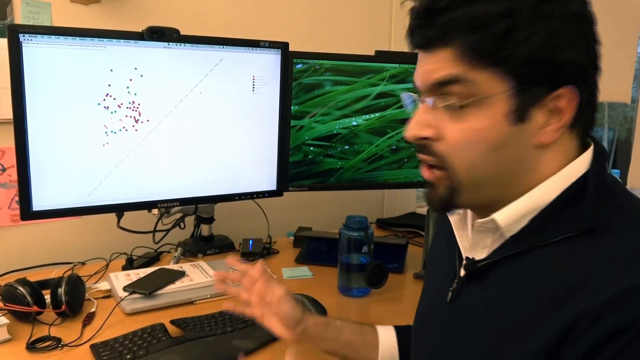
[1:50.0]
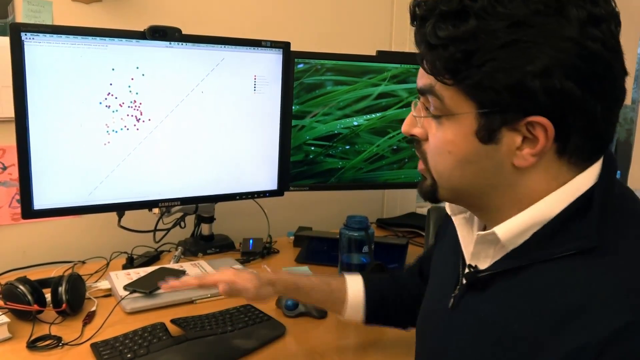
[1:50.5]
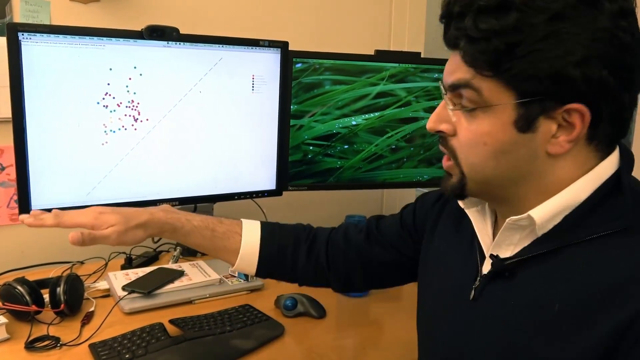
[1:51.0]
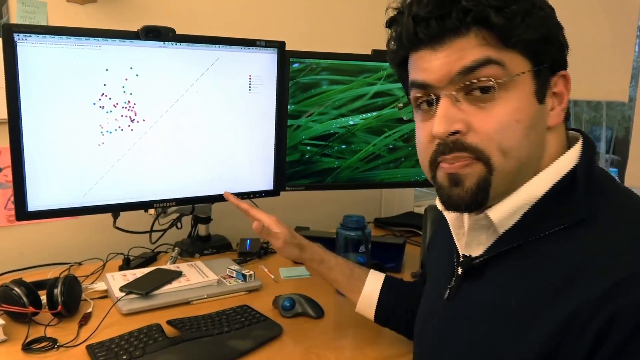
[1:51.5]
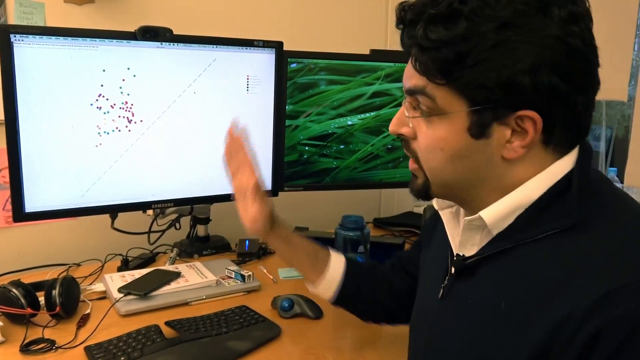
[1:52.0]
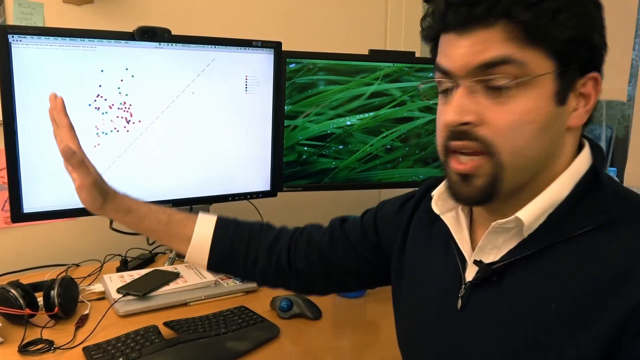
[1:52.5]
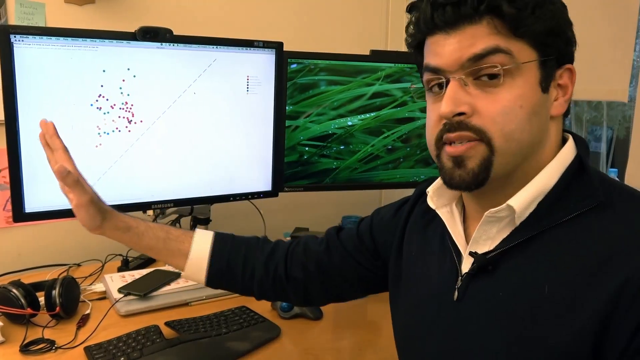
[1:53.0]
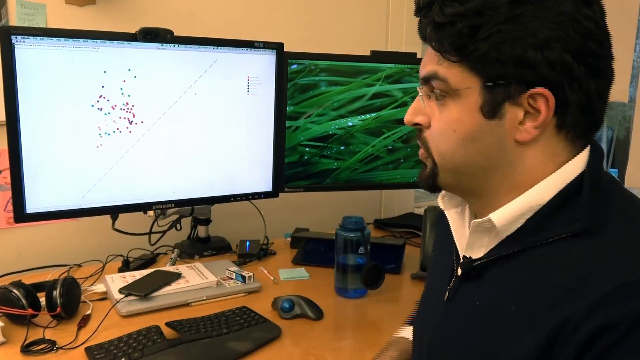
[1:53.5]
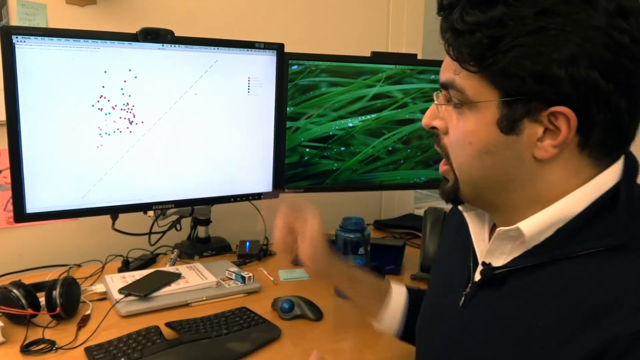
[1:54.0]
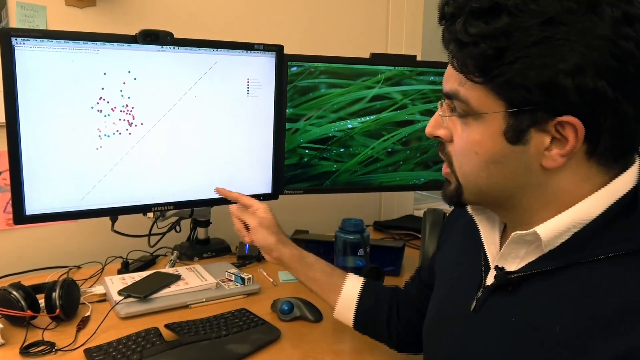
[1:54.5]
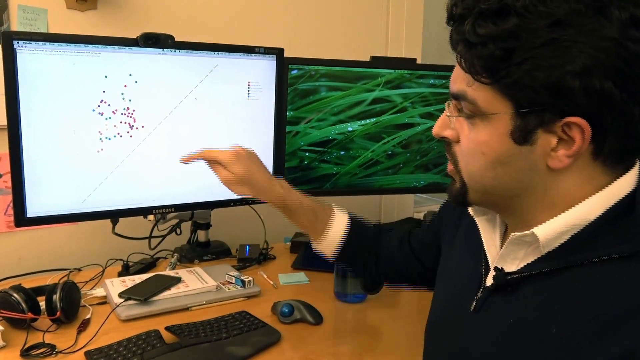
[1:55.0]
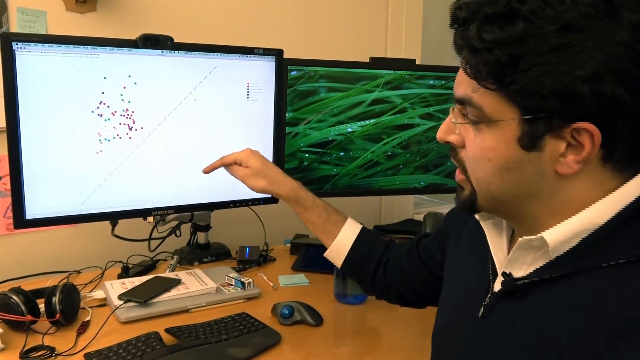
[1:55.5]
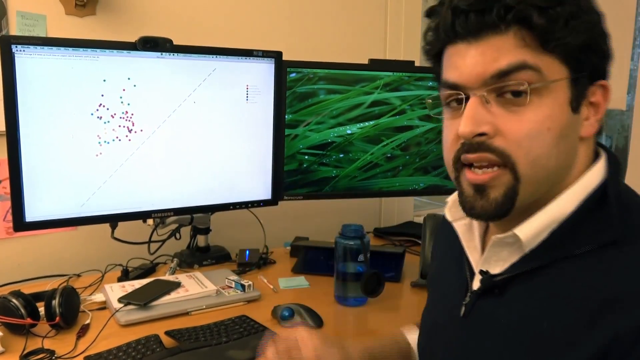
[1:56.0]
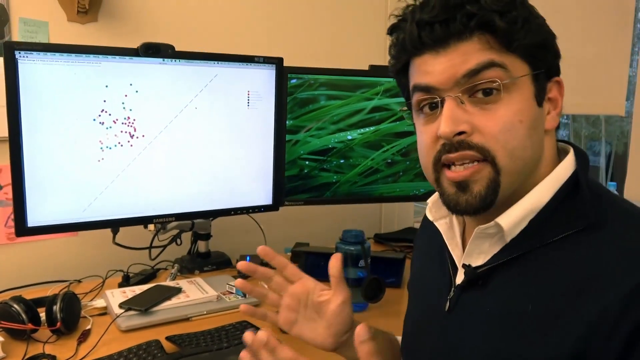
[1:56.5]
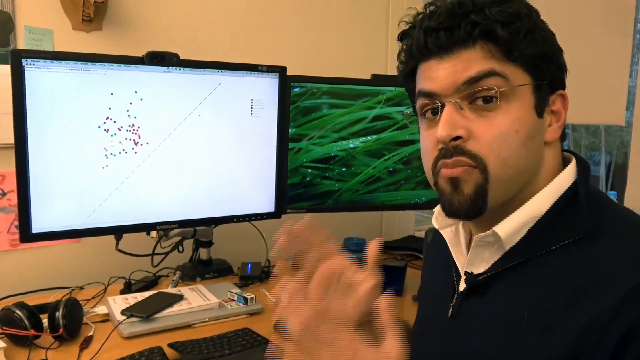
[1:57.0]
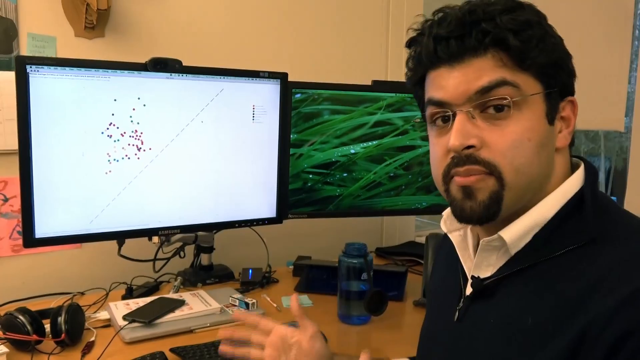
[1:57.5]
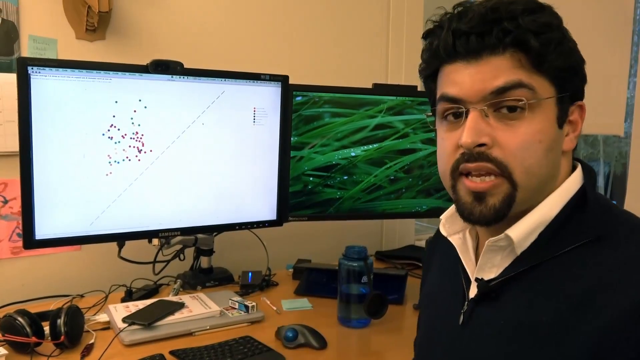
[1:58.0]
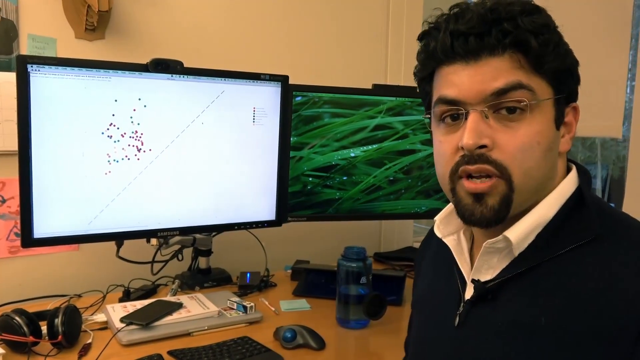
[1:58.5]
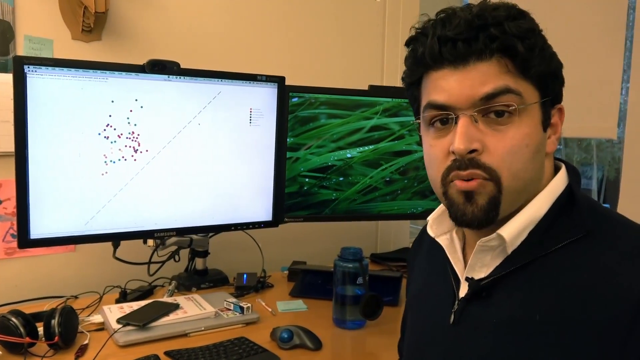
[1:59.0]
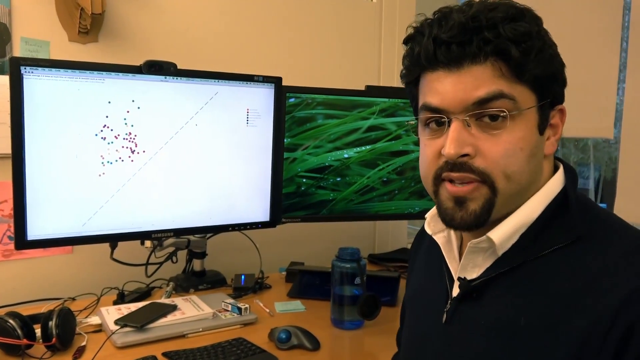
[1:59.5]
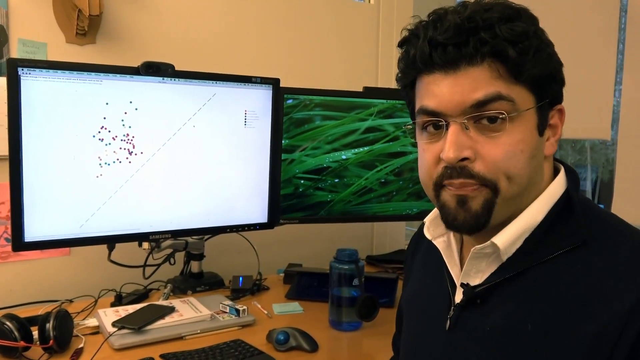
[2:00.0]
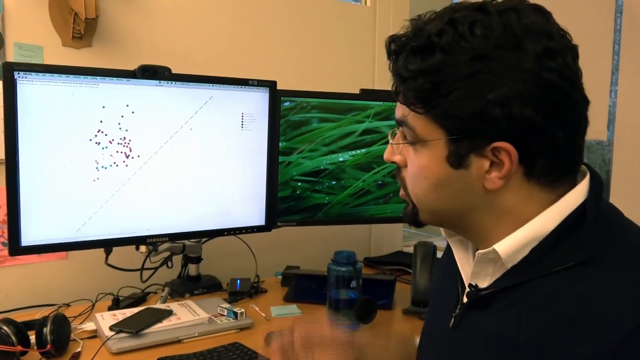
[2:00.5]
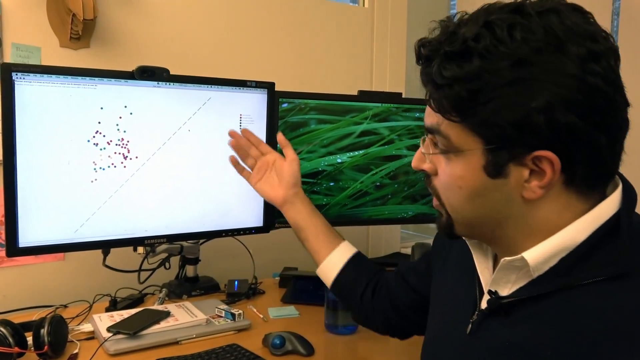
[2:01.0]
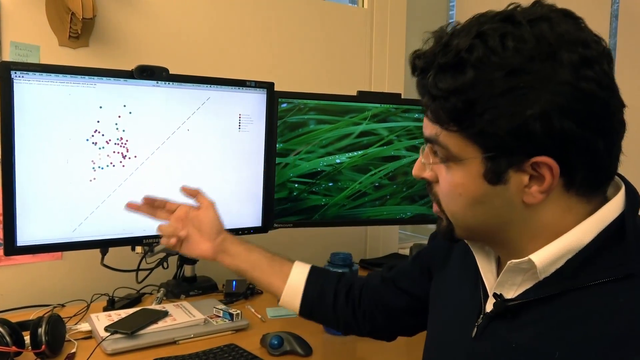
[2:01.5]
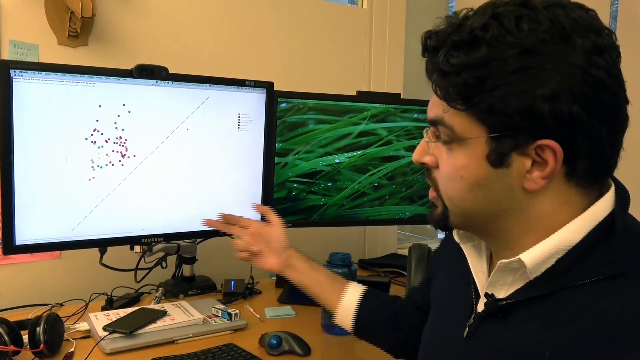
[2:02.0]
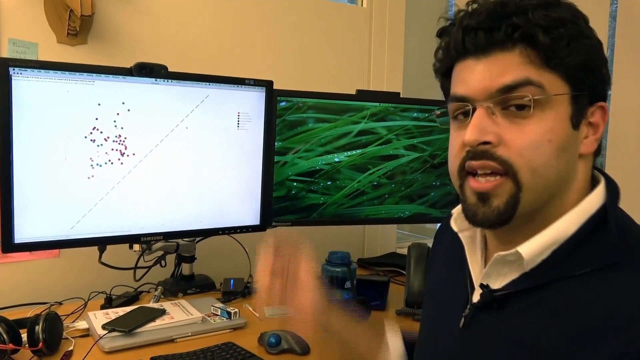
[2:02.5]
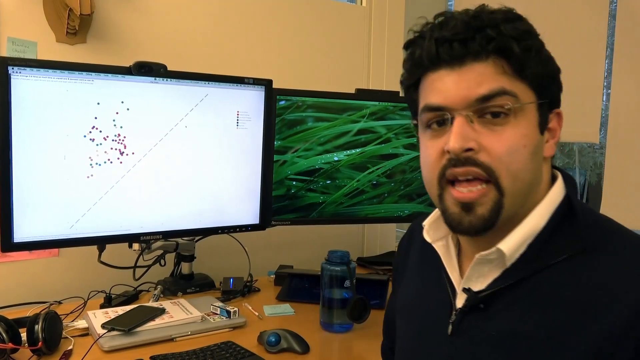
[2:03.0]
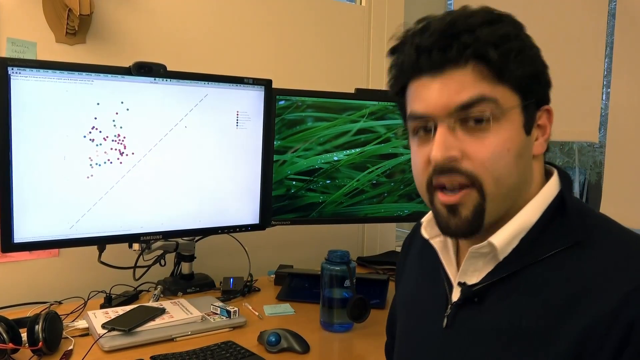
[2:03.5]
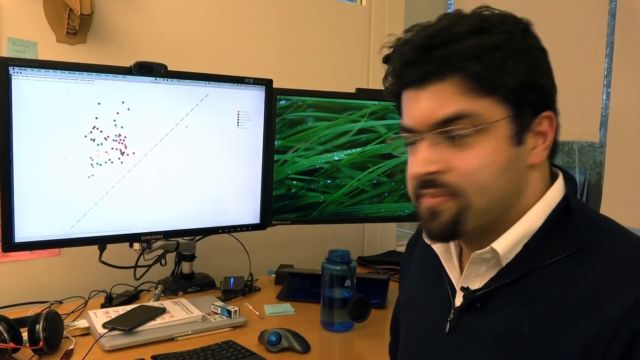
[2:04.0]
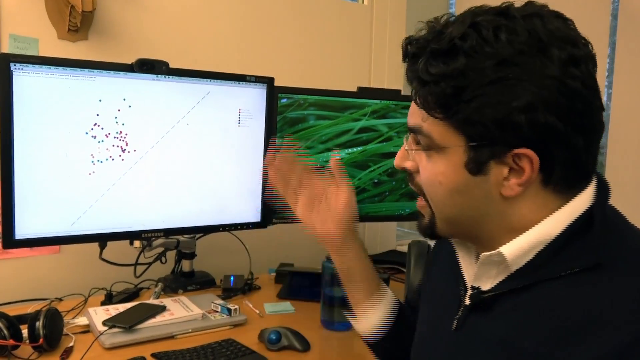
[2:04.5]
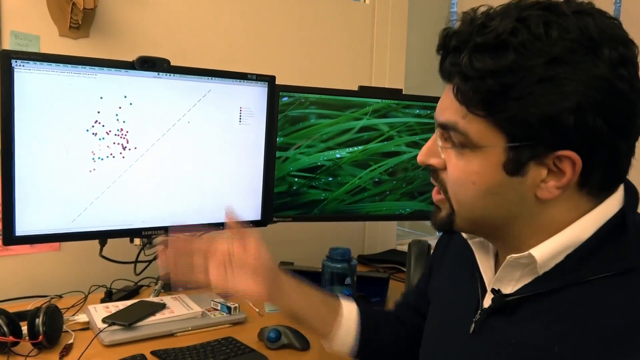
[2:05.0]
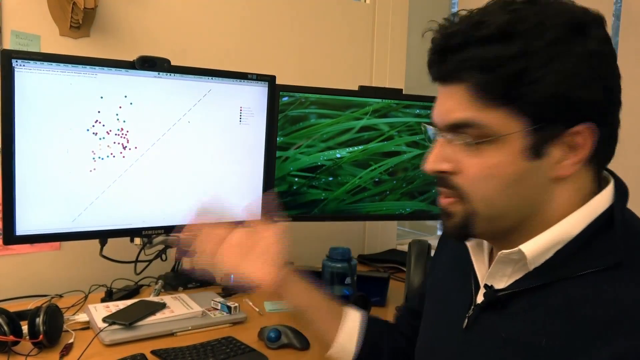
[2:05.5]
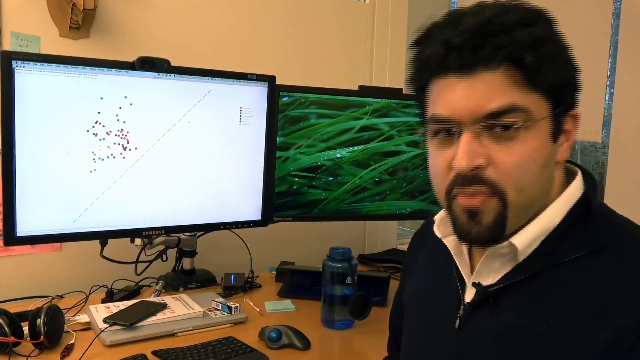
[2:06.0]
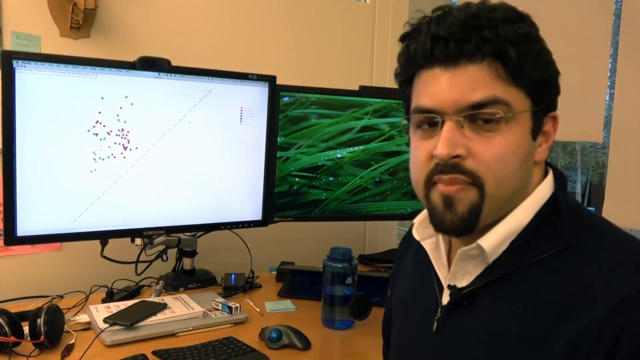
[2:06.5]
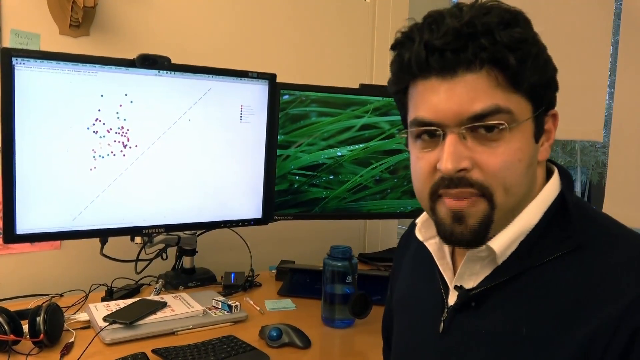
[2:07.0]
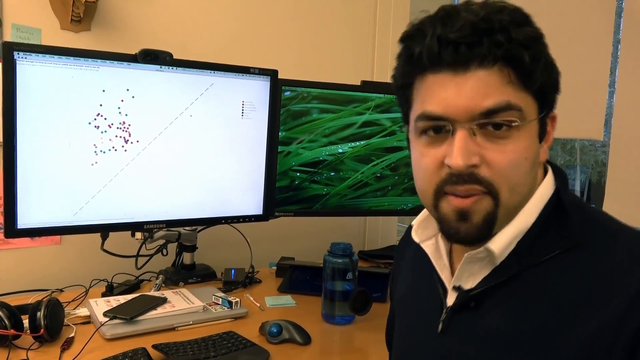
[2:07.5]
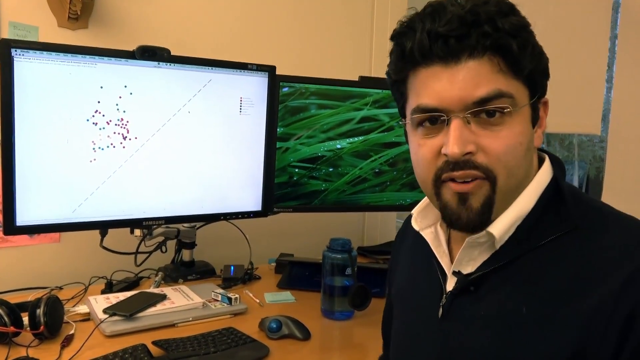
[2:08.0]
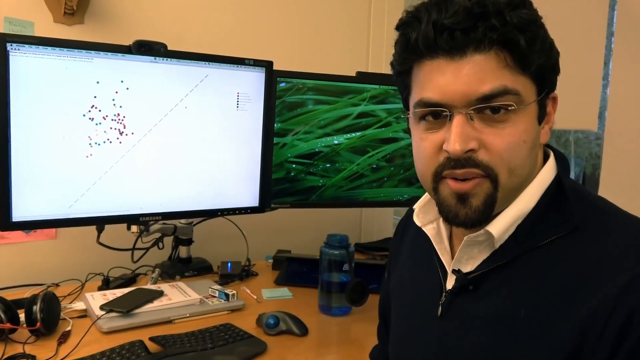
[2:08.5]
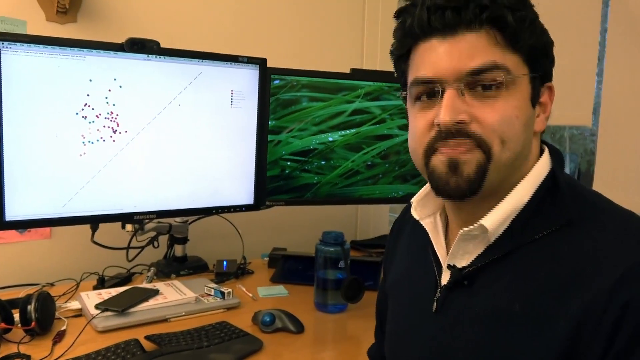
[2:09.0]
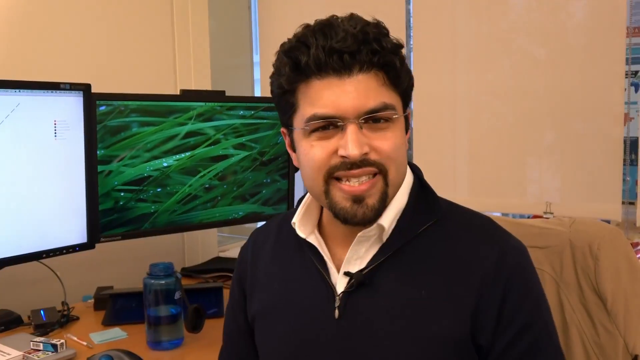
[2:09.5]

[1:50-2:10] Back at the desk, the man looks at plotted points, apparently markers of what he is discussing. He gets up again and the camera goes with him. He uses a lot of hand gestures. A whole new chart of plotted points is shown, with no visible writing on it.